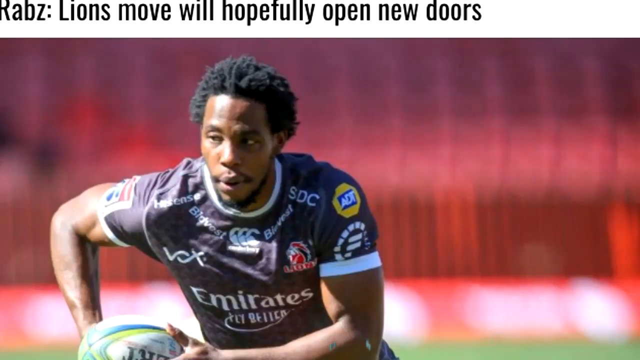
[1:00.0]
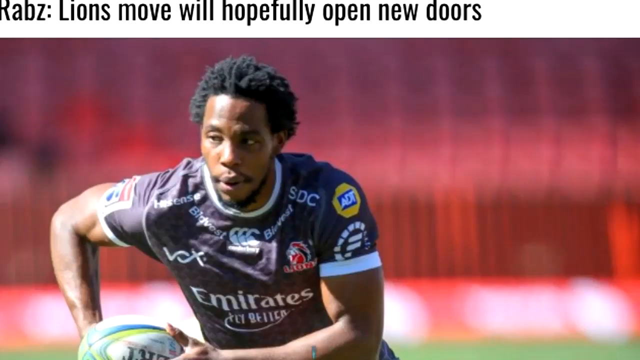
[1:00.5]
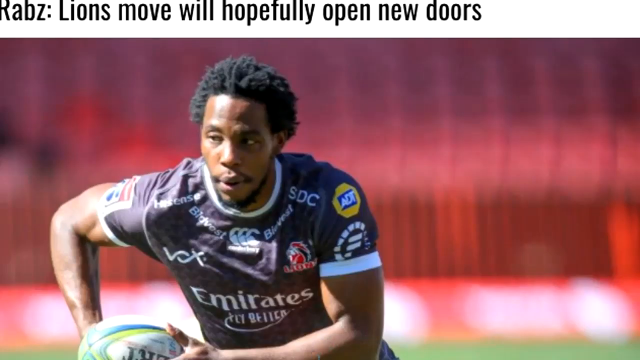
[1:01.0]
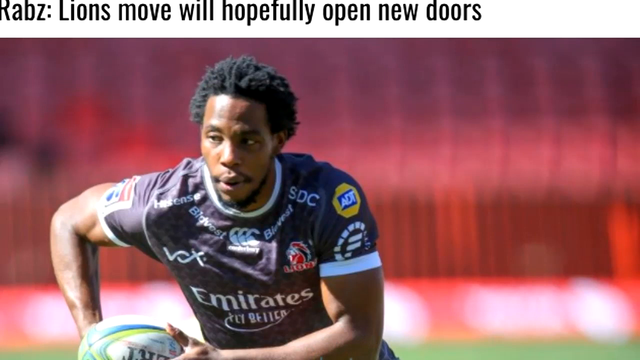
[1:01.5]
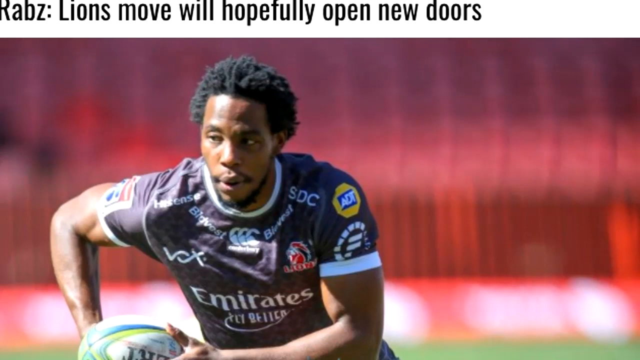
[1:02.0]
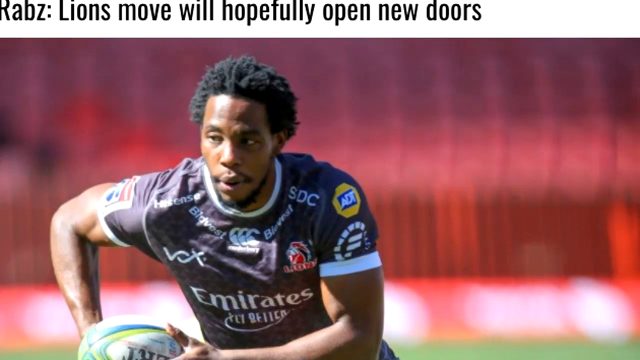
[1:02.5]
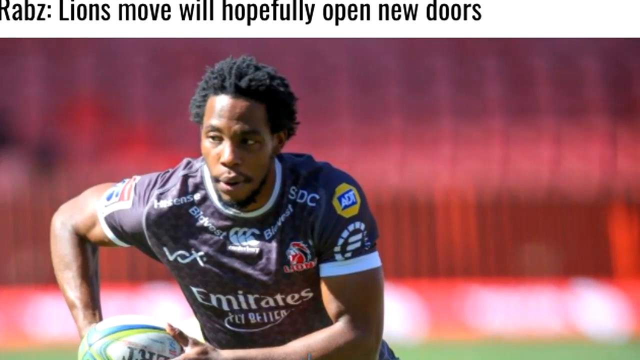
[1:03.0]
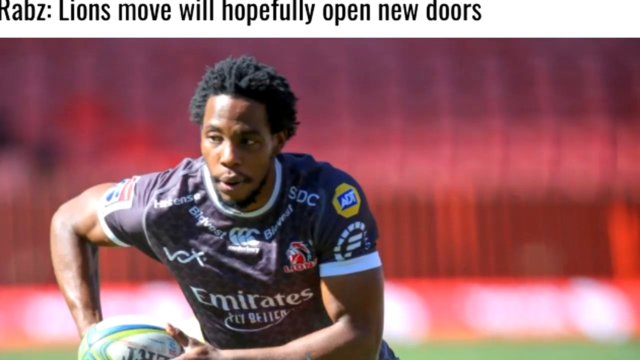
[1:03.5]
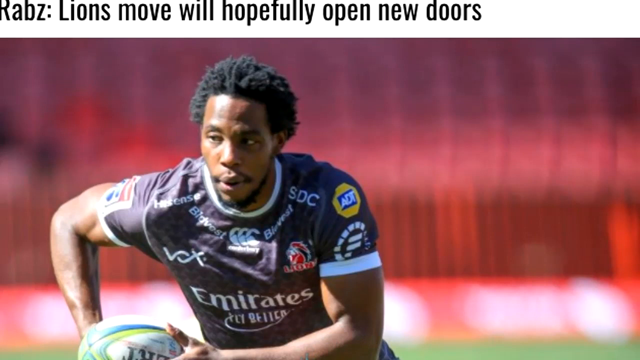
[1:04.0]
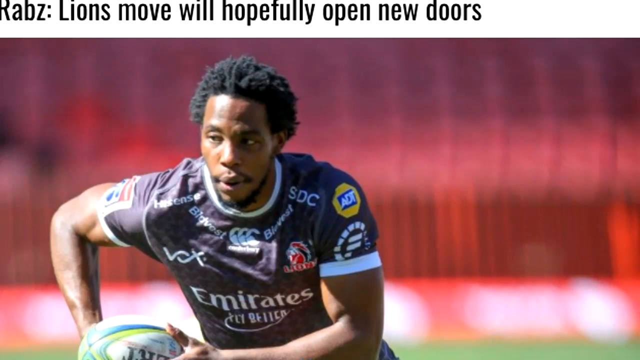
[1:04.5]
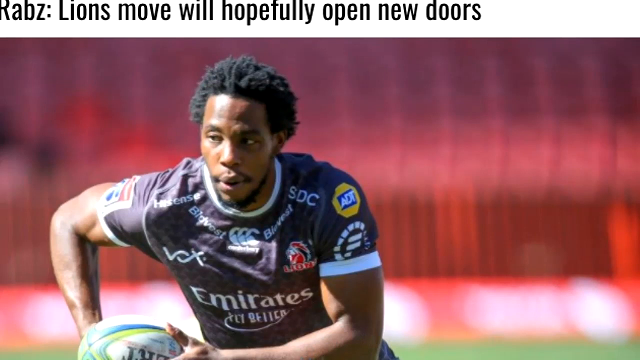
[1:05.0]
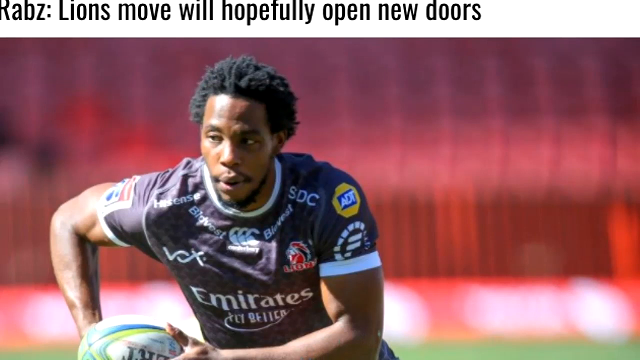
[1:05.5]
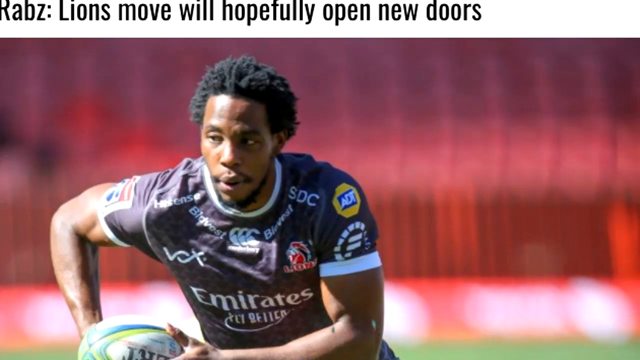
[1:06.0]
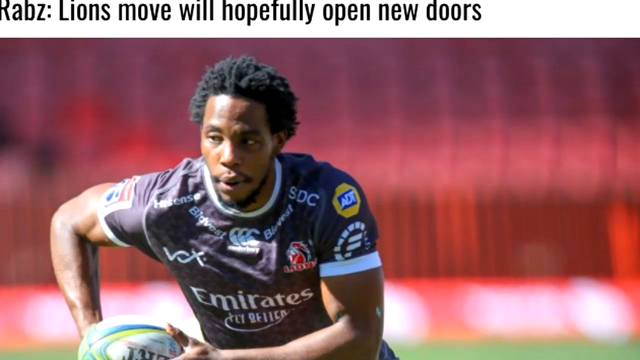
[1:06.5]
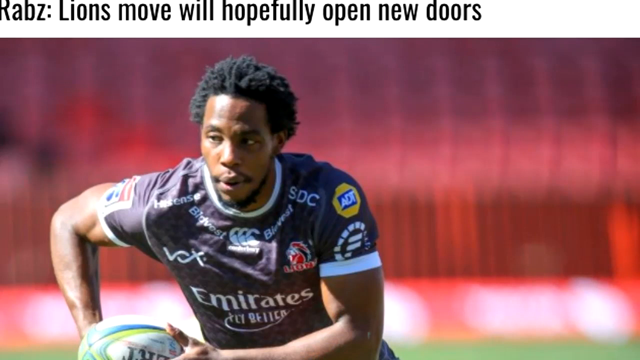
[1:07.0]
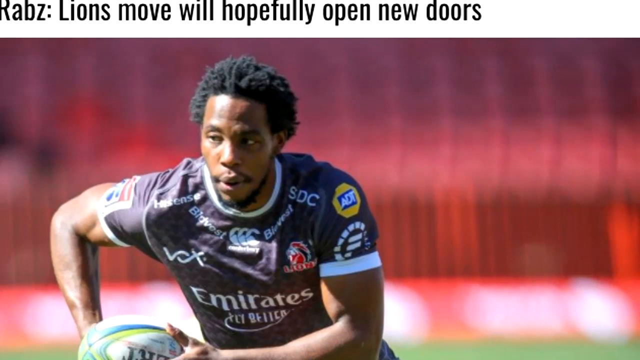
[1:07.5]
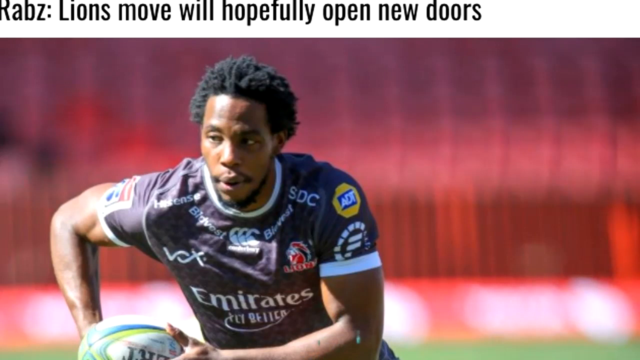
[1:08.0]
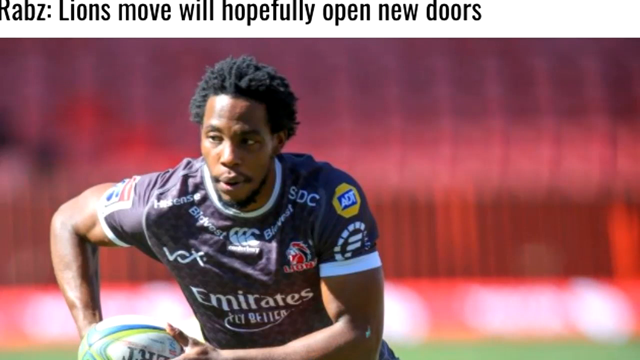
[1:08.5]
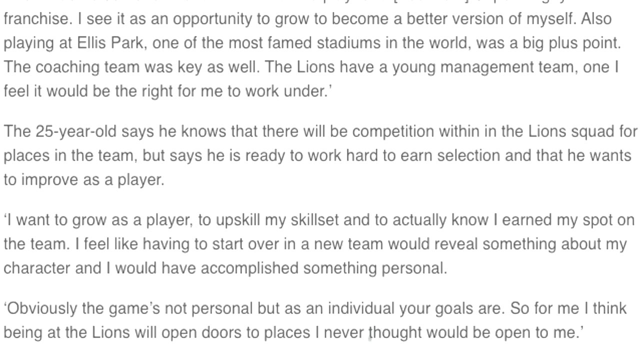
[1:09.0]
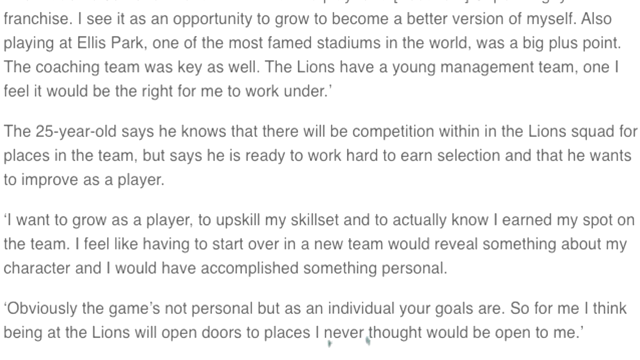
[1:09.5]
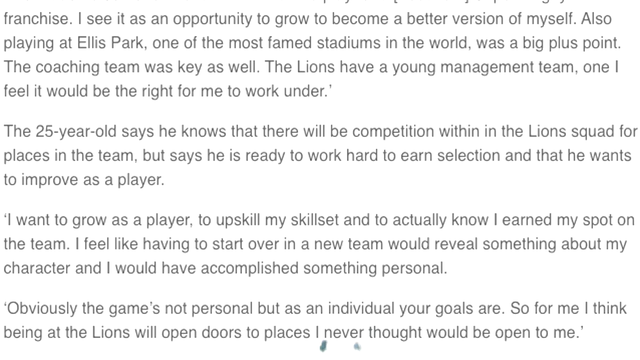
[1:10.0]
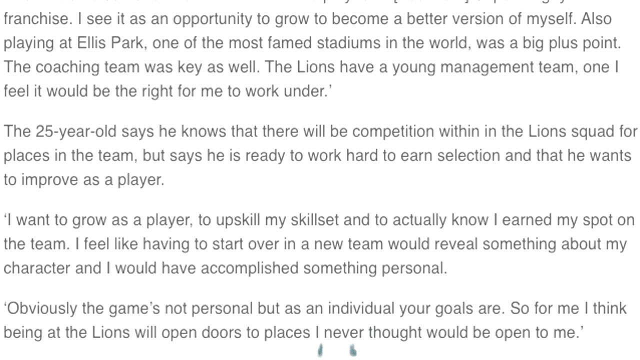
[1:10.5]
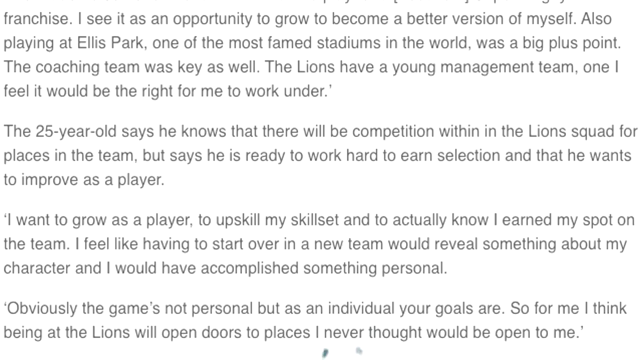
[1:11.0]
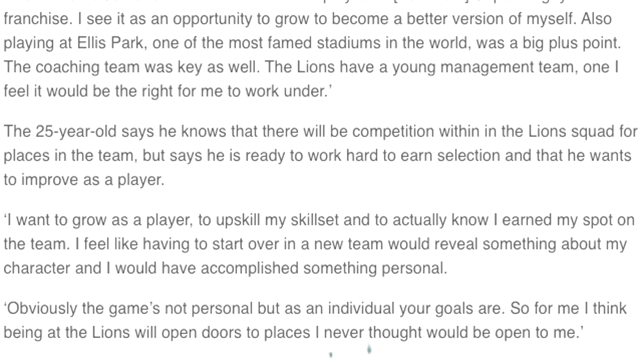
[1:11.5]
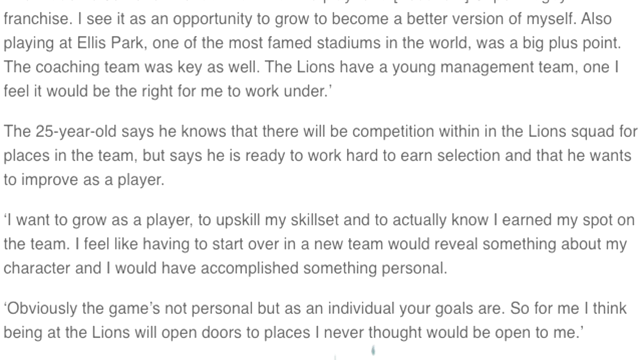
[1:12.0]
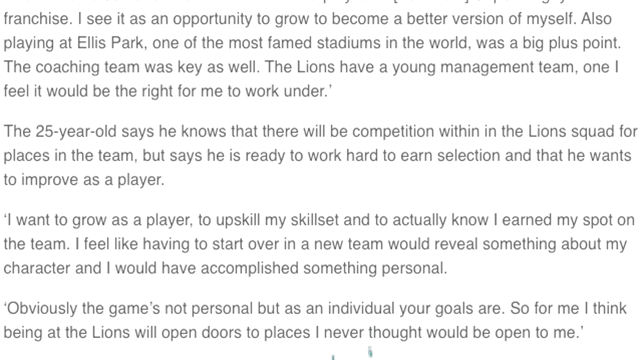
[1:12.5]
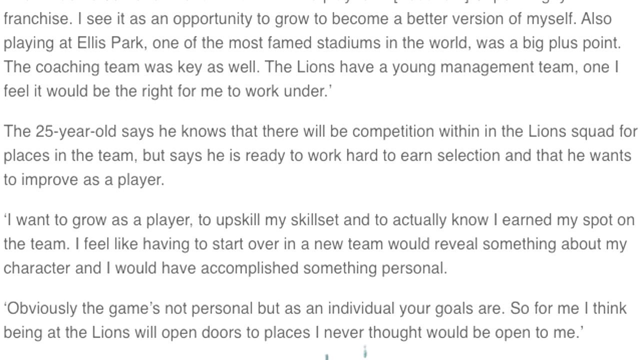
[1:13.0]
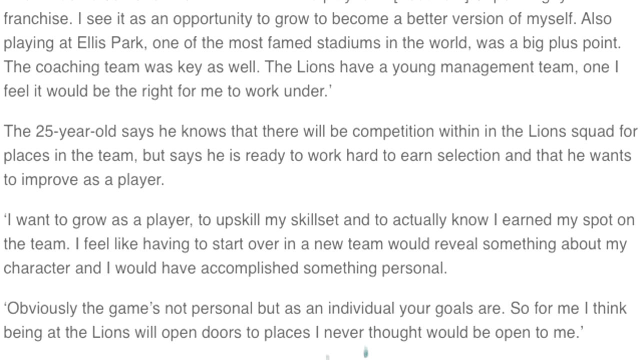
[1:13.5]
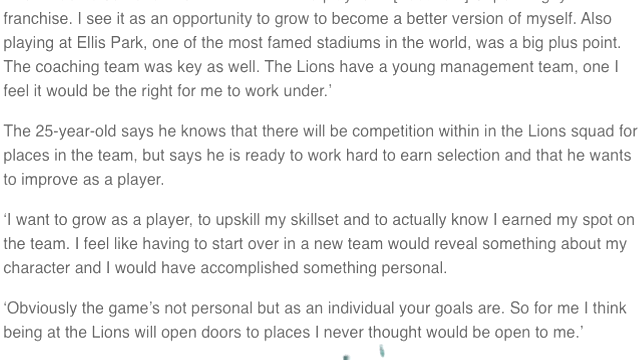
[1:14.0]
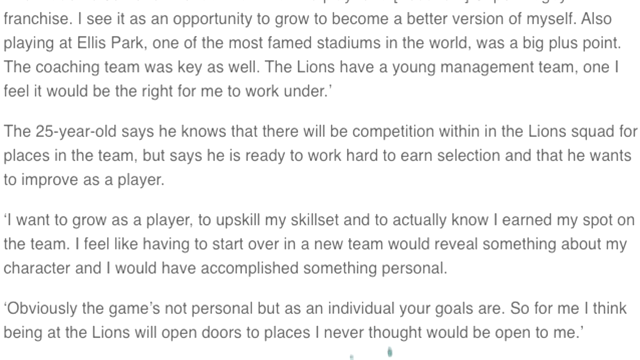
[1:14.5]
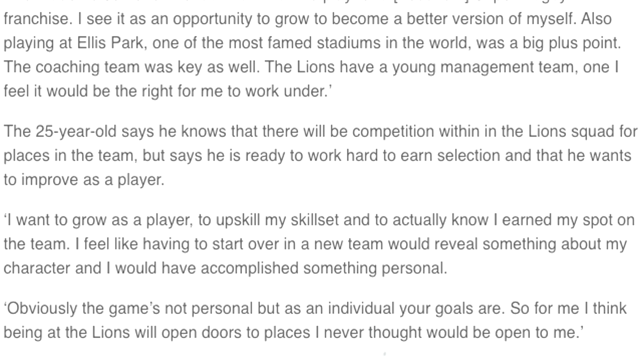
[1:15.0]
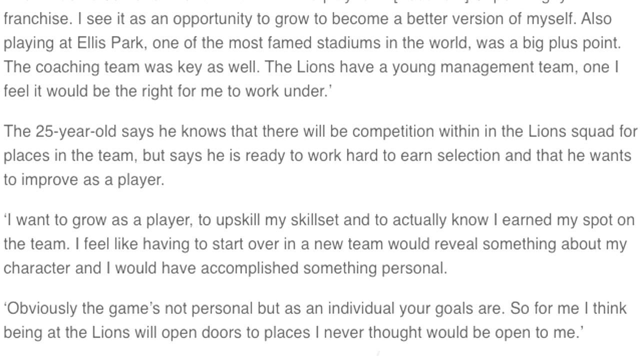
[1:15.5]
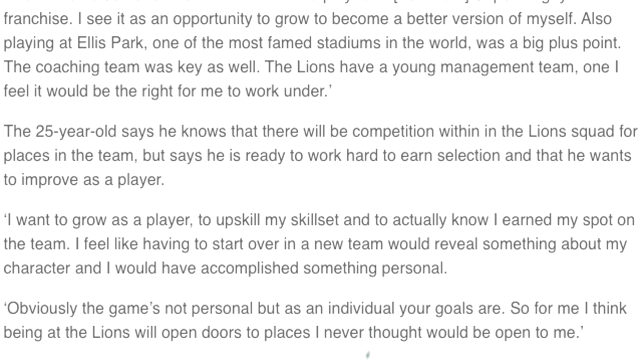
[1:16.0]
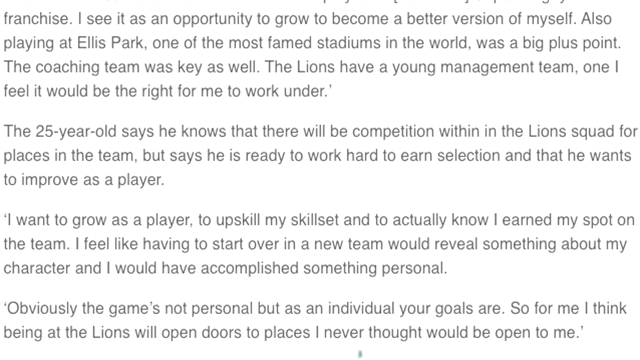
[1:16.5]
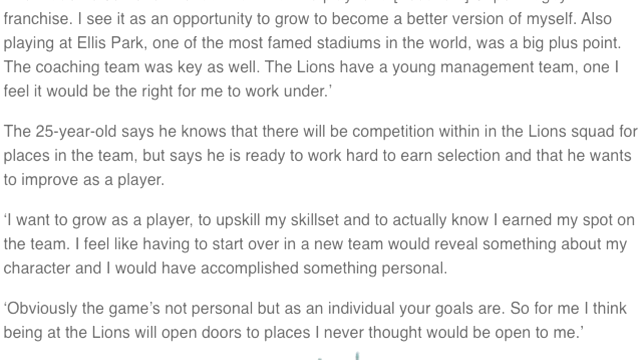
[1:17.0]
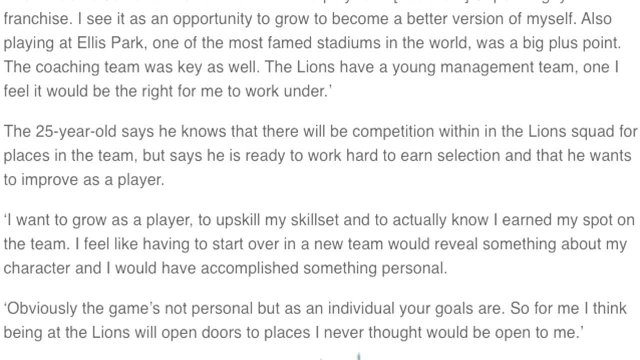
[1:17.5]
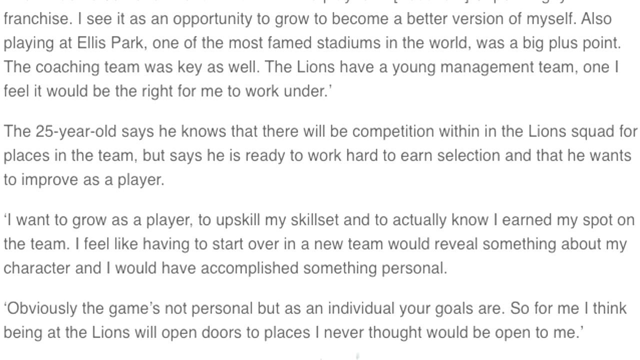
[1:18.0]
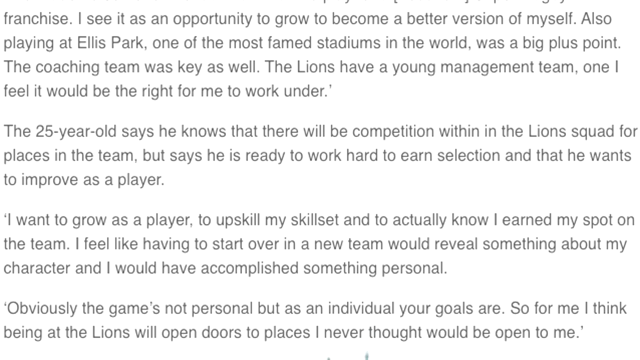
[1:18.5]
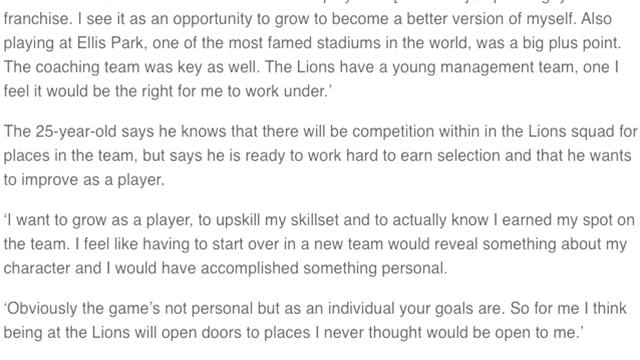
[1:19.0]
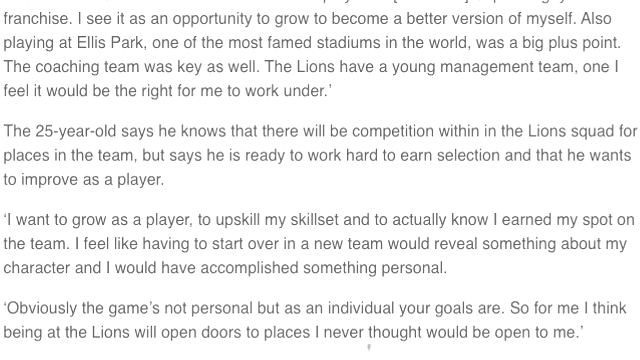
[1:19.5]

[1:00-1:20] The same black rugby player returns in a still shot of an action scene; he appears to be in action. The sun comes in from his right side, shadowing his left side, and he appears to be running with the ball. The image is static, with a deep red color in the background. It then moves to a static image of a lot of text, which starts with "I see it as an opportunity to grow and become a better version of myself. Also playing at Ellis Park, one of the most famed stadiums in the world, was a big plus point. The coaching team was key as well. The Lions have a young management team, one I feel it would be the right for me to work under. The 25-year-old says he knows that there will be a competition within the Lion squad for places in the team, but says he is ready to work hard to earn selection and that he wants to improve as a player."